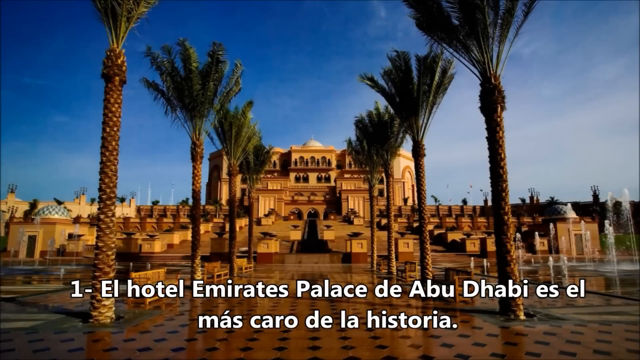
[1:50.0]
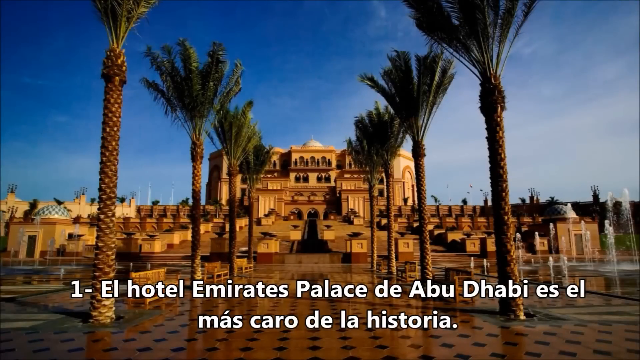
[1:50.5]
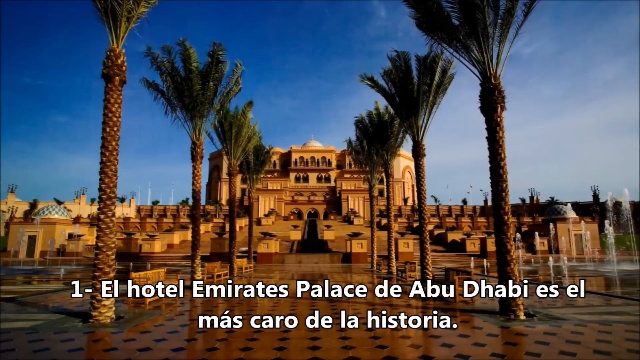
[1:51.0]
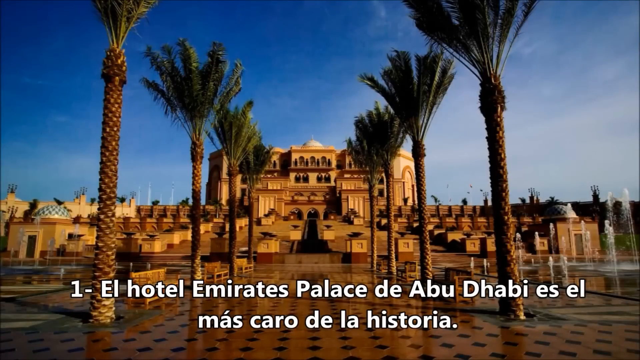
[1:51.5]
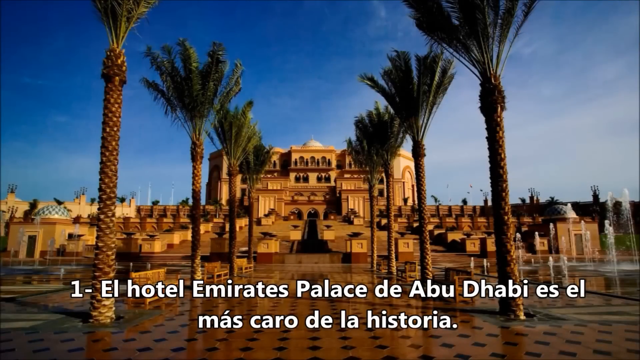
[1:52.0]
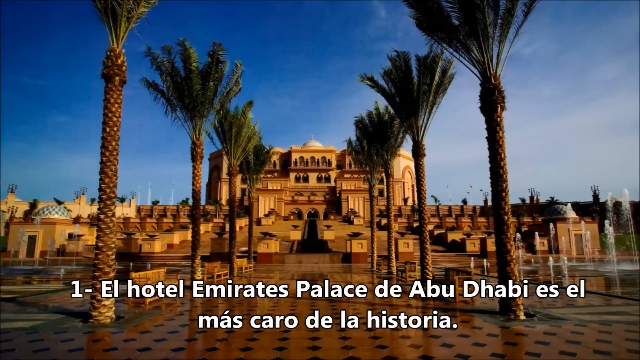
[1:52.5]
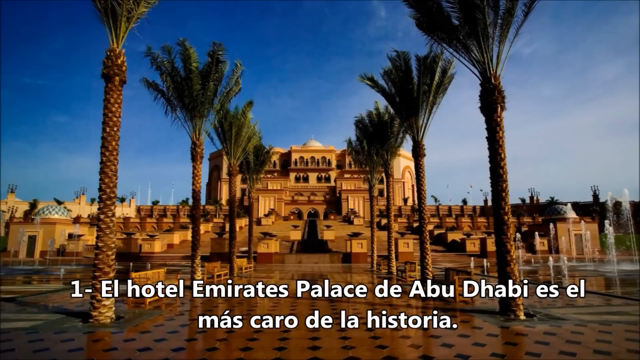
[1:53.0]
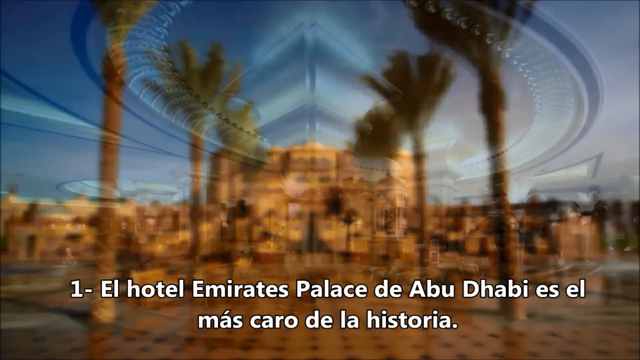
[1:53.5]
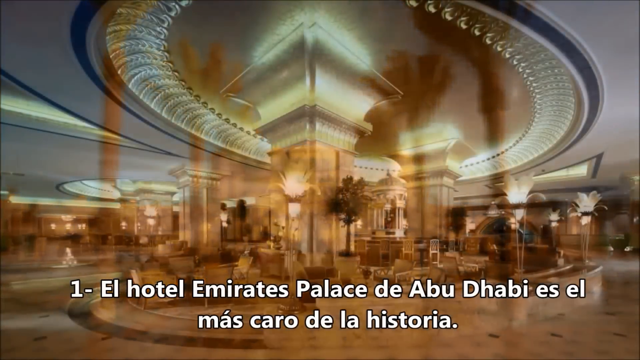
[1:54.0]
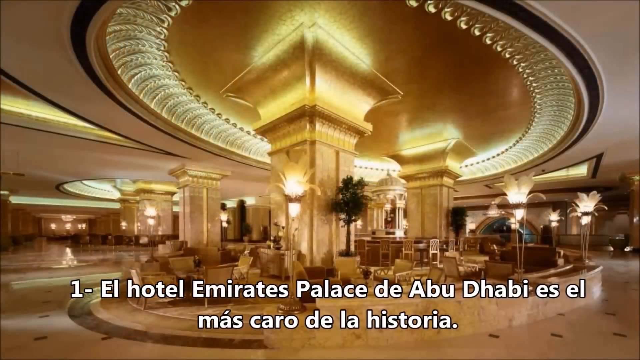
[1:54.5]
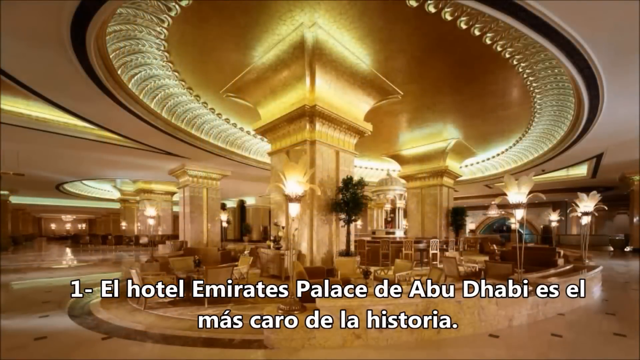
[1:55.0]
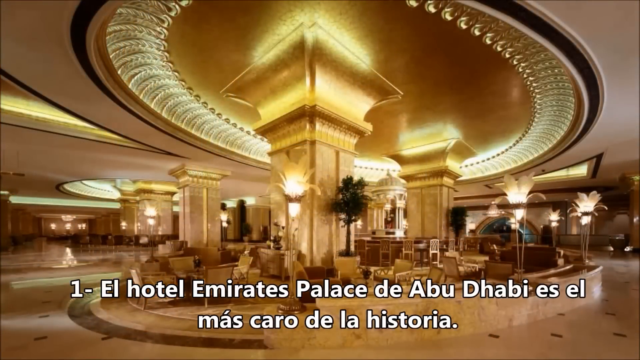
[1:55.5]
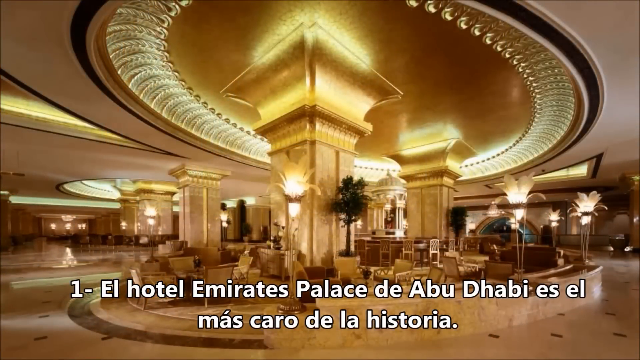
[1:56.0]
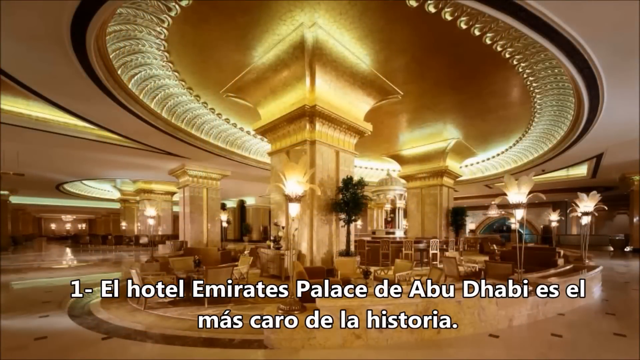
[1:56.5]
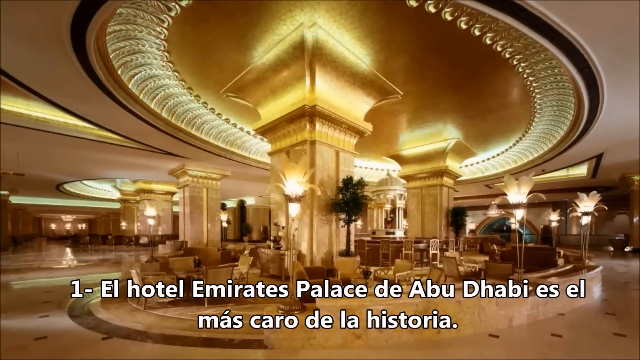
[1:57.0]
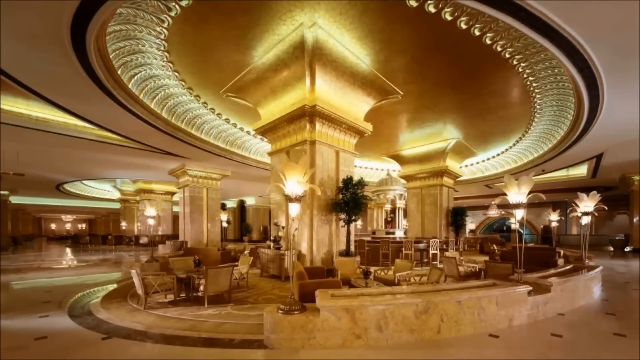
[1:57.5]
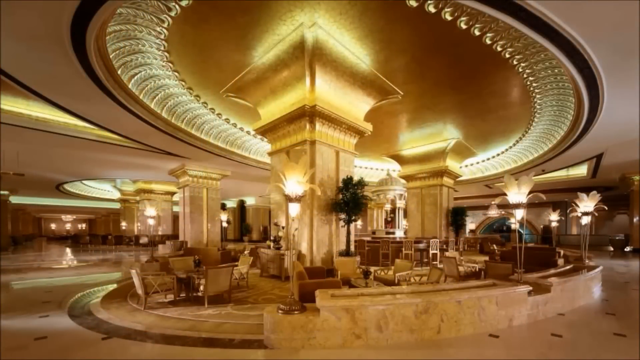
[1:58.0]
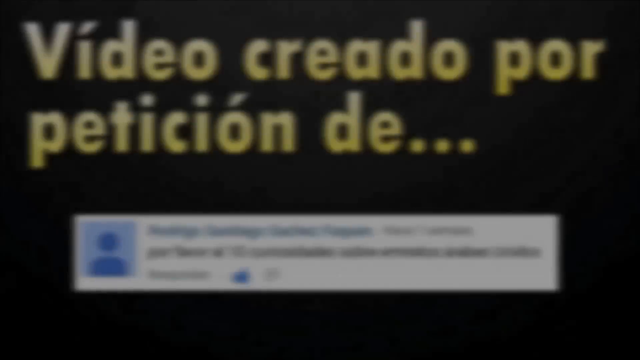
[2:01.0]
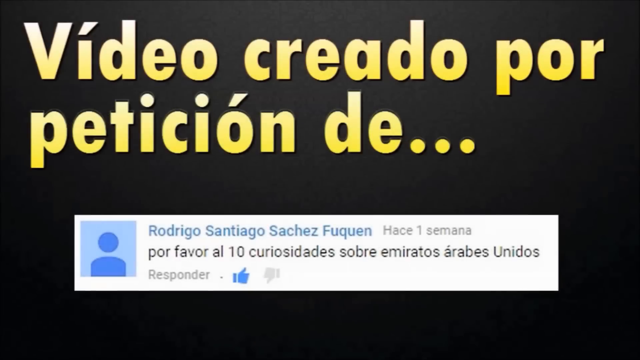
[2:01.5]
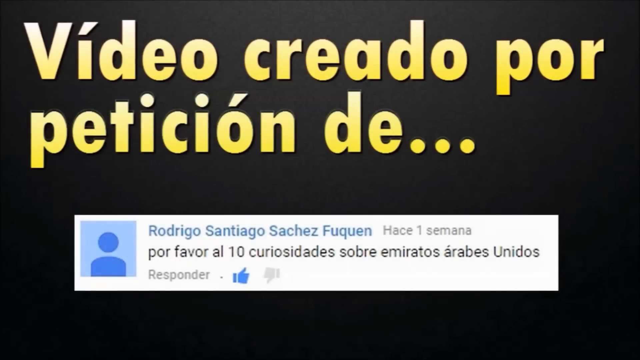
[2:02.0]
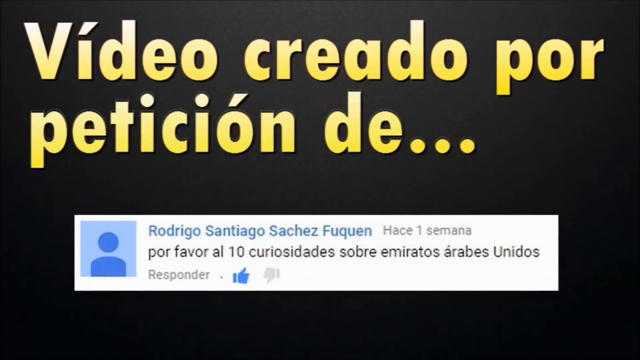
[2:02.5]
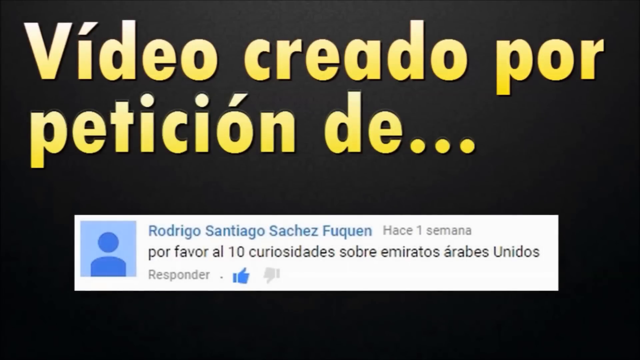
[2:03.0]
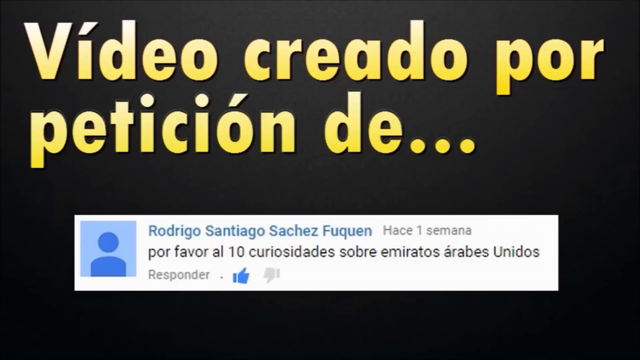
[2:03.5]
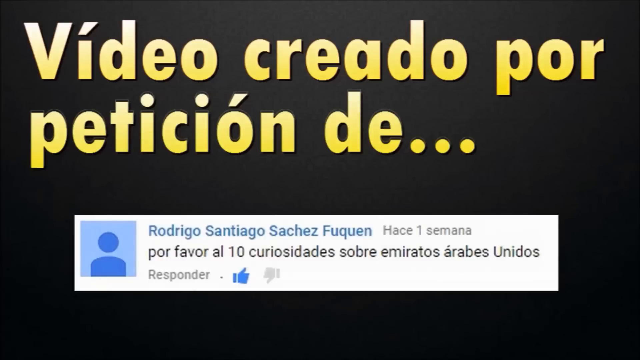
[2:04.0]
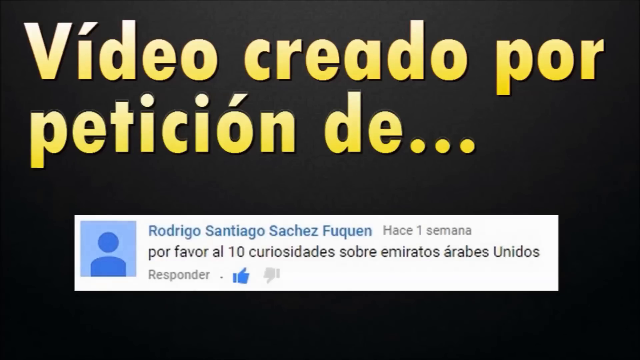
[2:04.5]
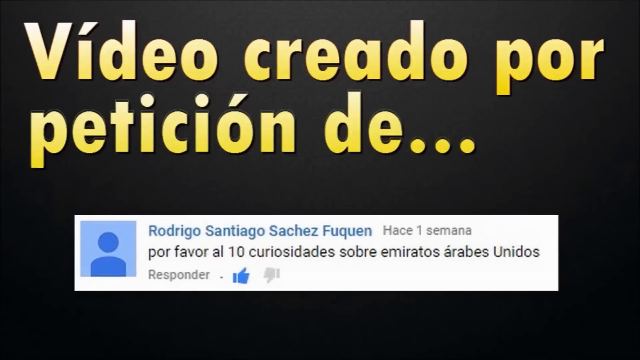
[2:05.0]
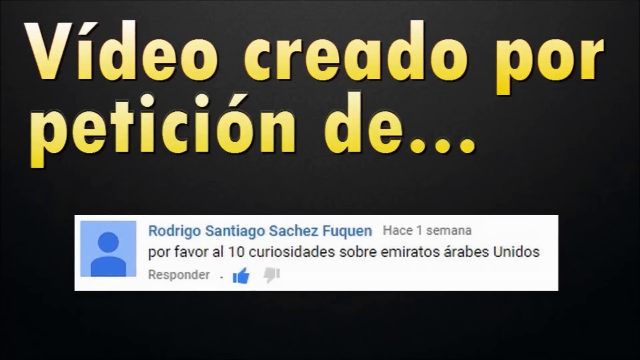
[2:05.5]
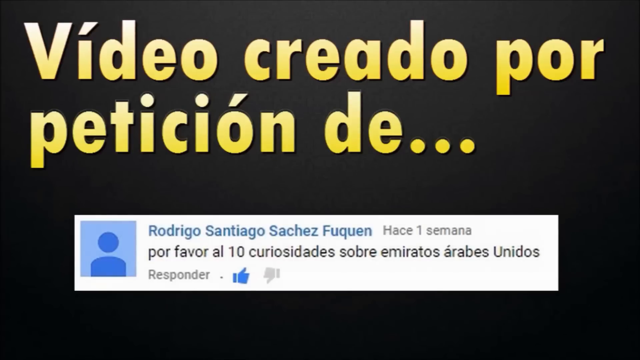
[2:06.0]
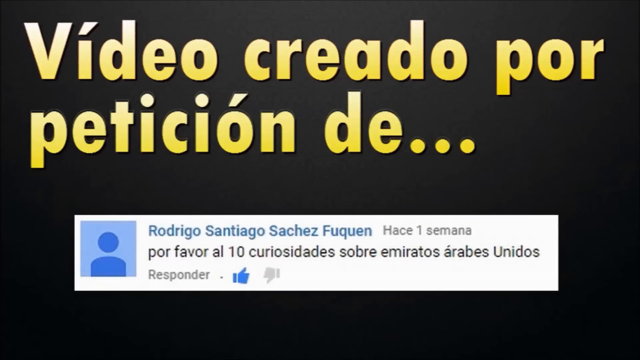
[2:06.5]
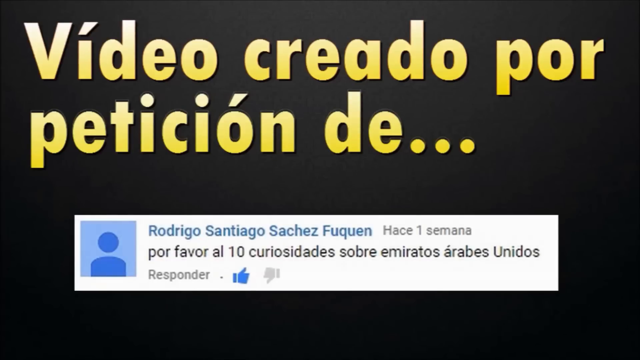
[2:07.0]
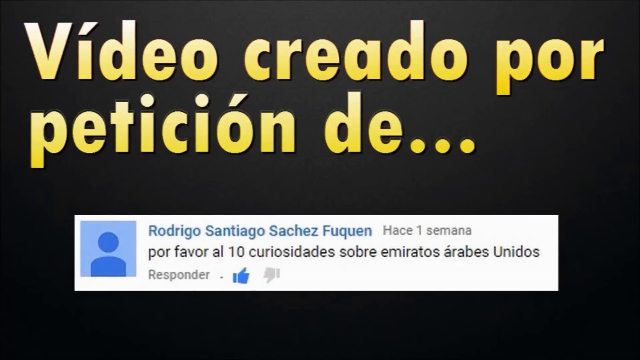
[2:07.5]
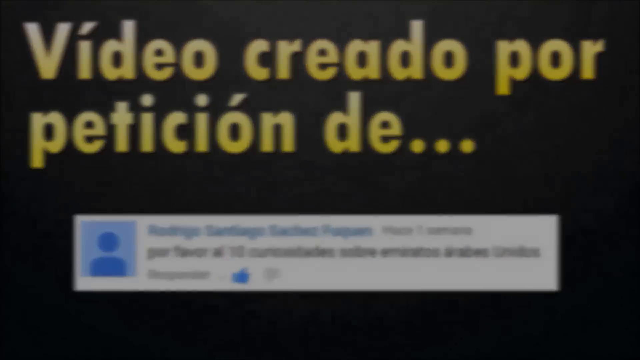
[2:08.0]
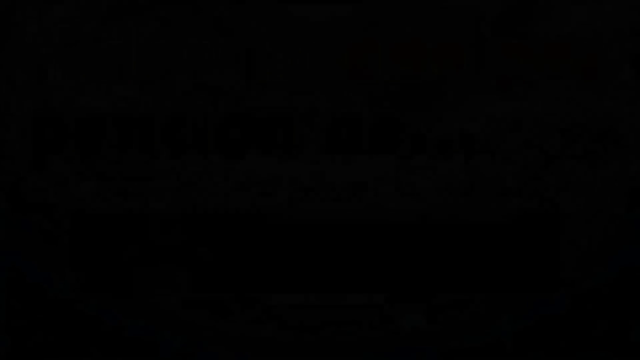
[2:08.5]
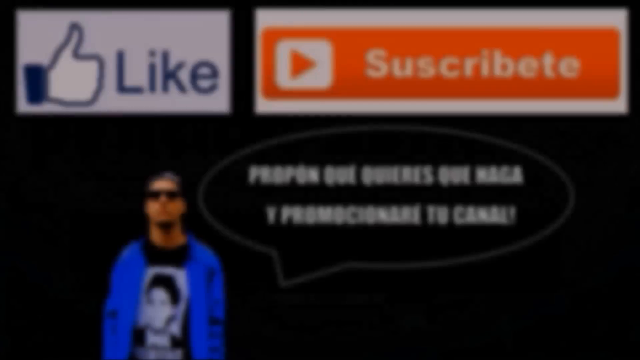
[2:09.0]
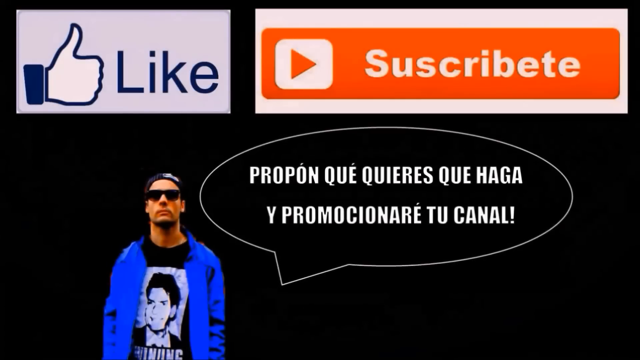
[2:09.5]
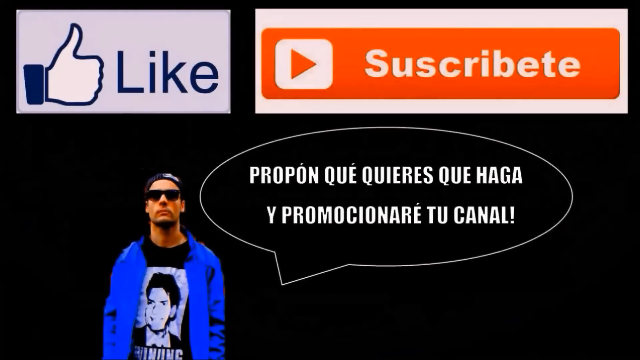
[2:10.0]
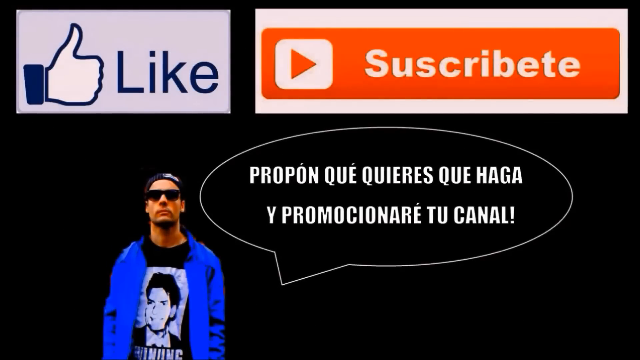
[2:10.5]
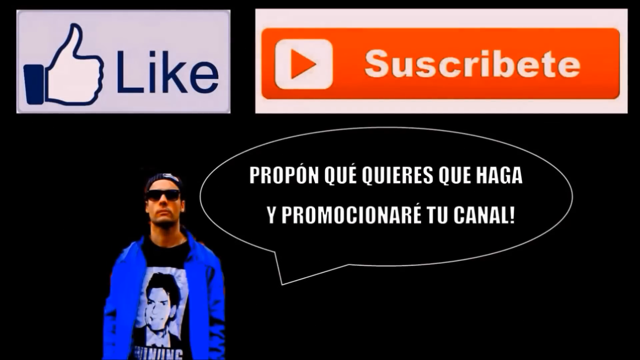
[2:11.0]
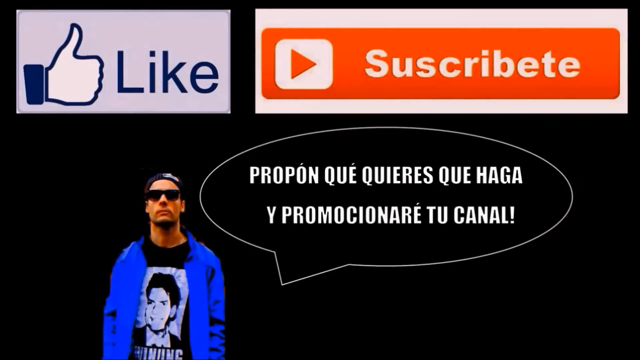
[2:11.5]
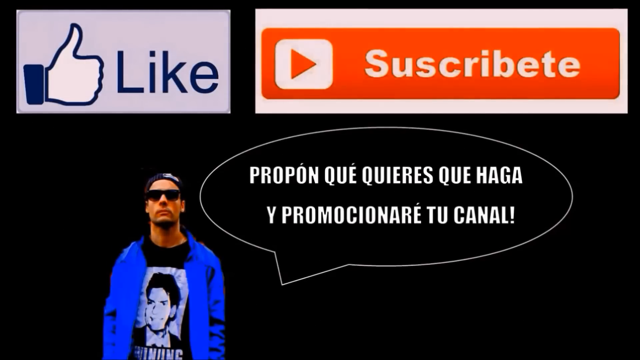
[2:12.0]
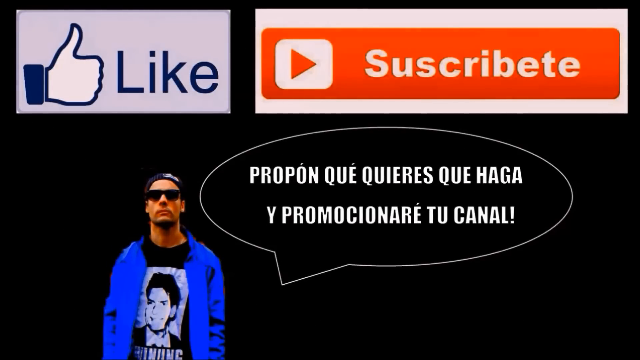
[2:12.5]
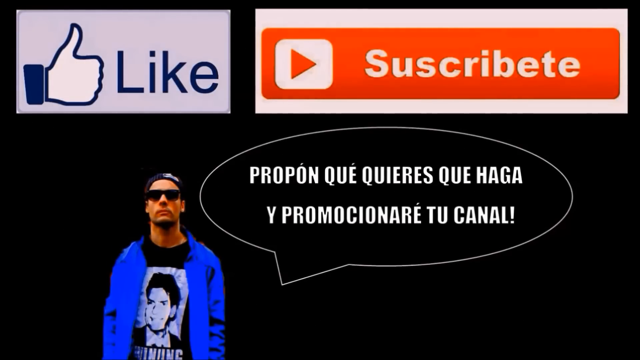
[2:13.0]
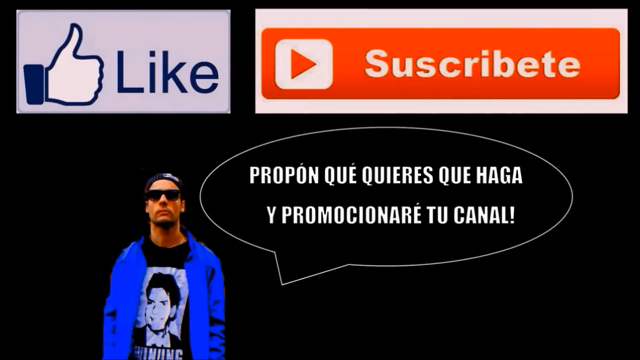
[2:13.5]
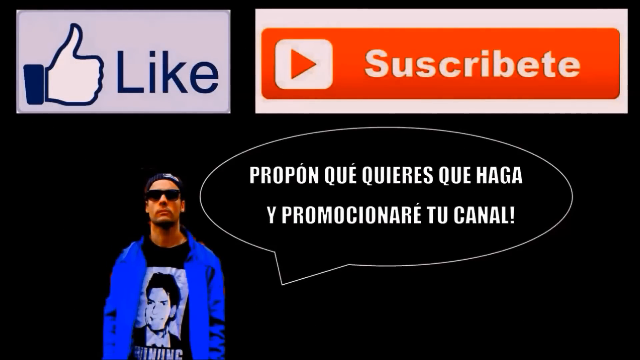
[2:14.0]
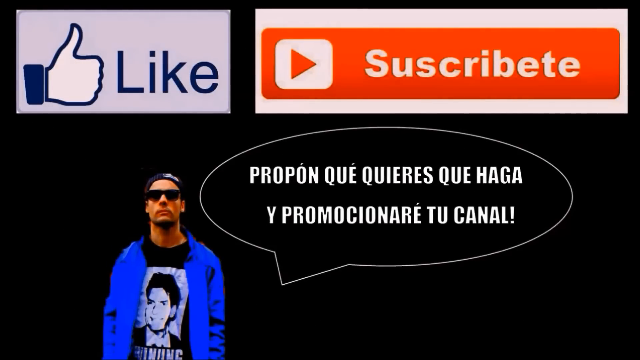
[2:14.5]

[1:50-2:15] A picture of the outside of the hotel appears, along with a picture of what seems to be its lobby. The hotel seems to be a 5-star hotel, looking very ritzy and grand. According to the text in the video, the hotel seems to be the palace of Abu Dhabi. After the interior, a comment from one of the man's subscribers or frequent viewers is shown as what gave him the idea to make the video. A like button, a subscribe button and a picture of a guy, maybe the man who made the video, follow, presumably urging viewers to like and subscribe.